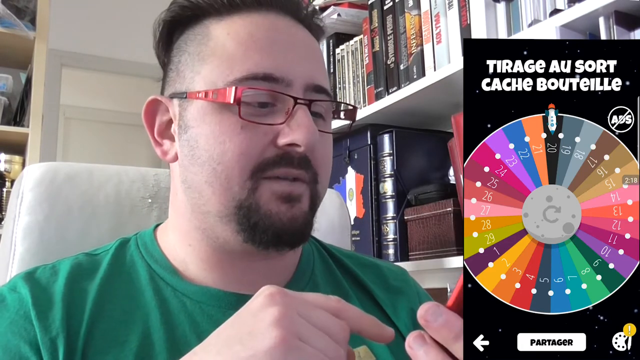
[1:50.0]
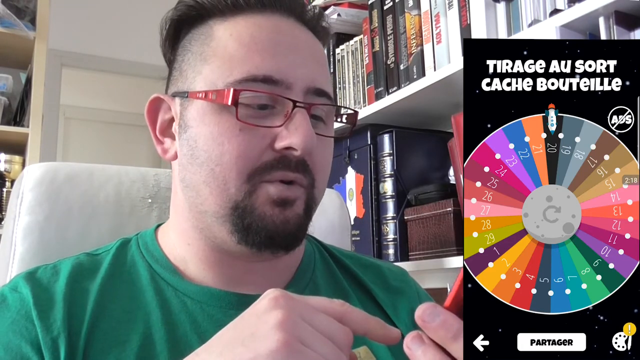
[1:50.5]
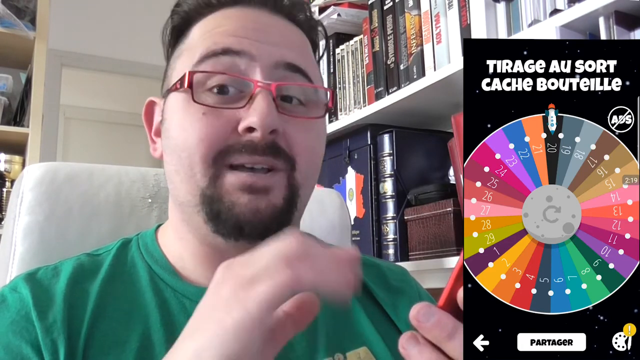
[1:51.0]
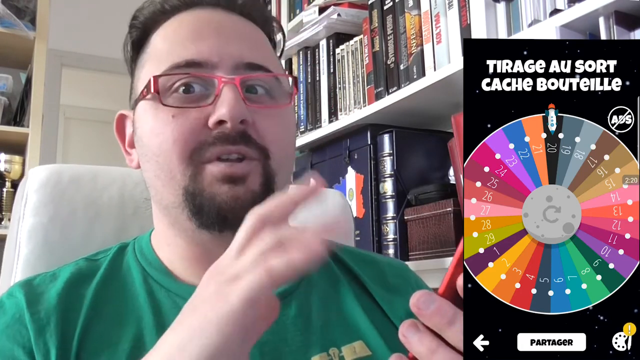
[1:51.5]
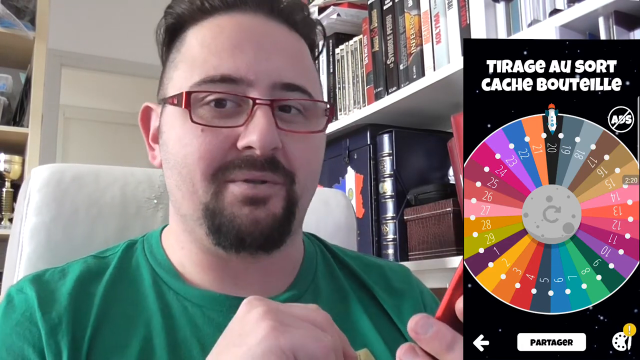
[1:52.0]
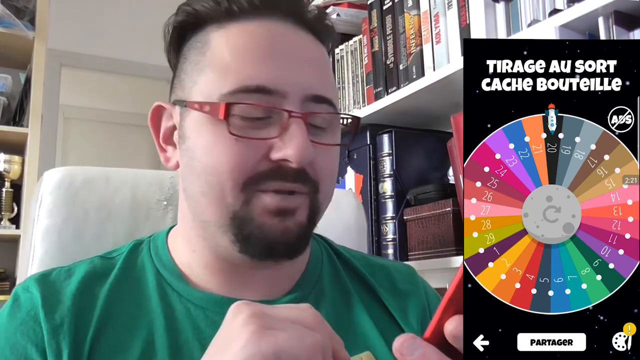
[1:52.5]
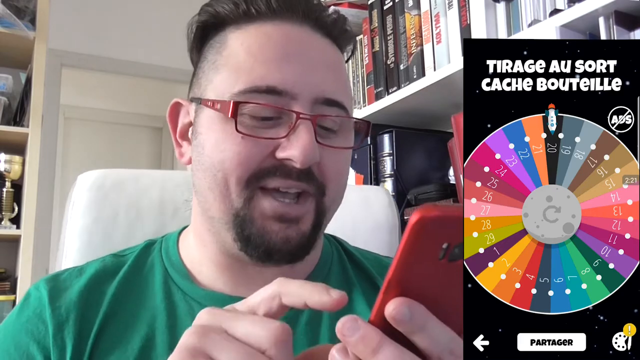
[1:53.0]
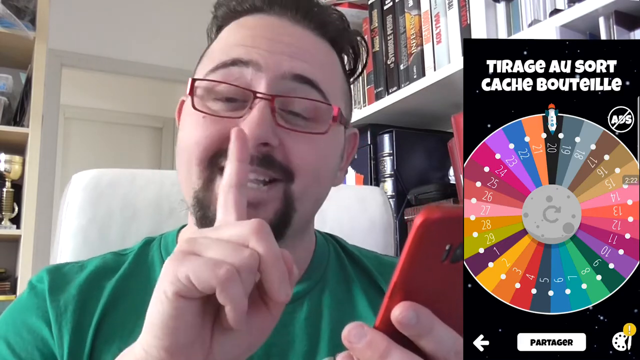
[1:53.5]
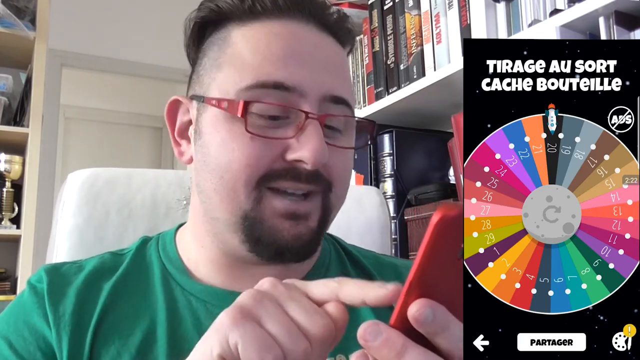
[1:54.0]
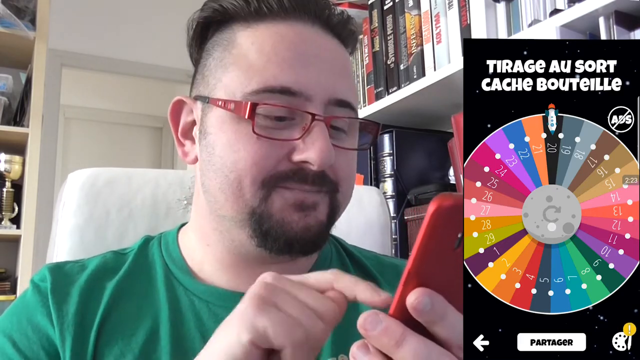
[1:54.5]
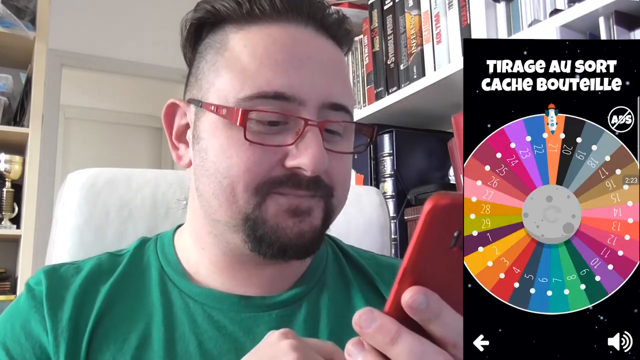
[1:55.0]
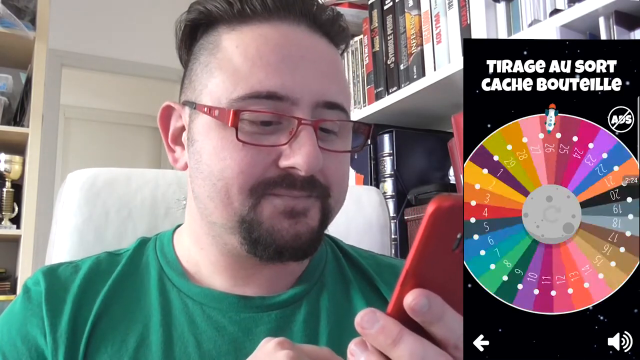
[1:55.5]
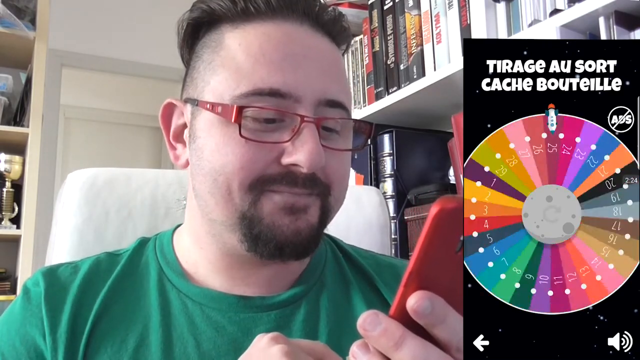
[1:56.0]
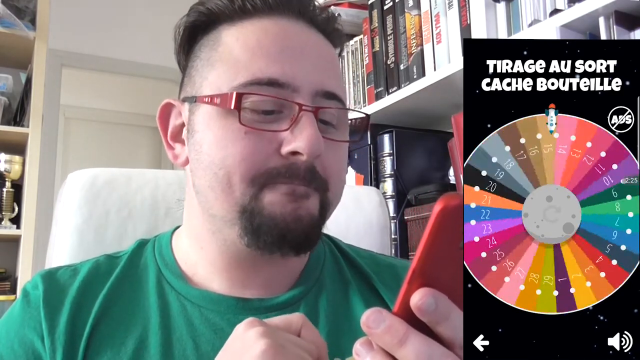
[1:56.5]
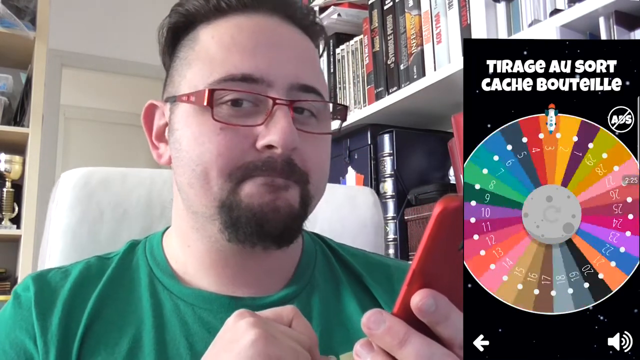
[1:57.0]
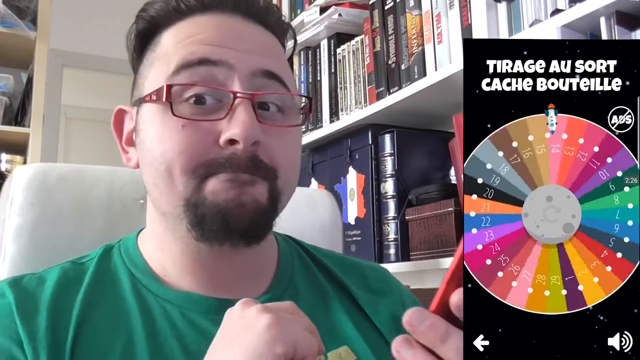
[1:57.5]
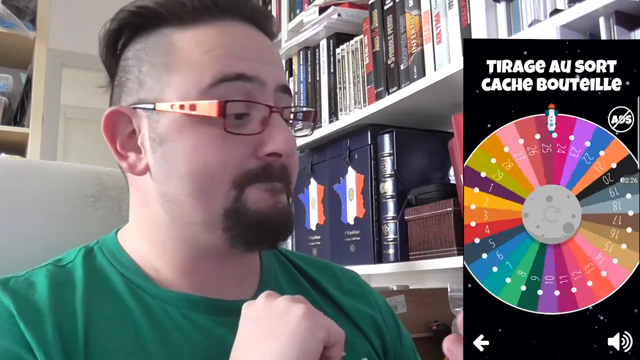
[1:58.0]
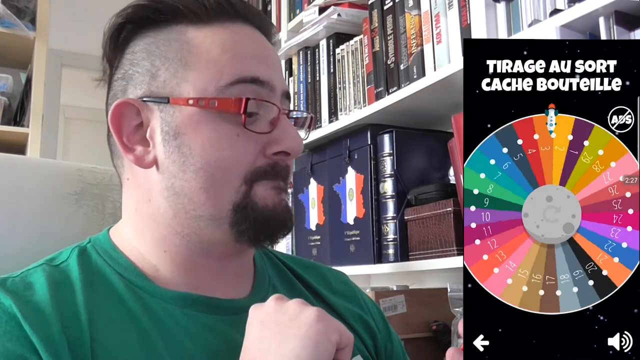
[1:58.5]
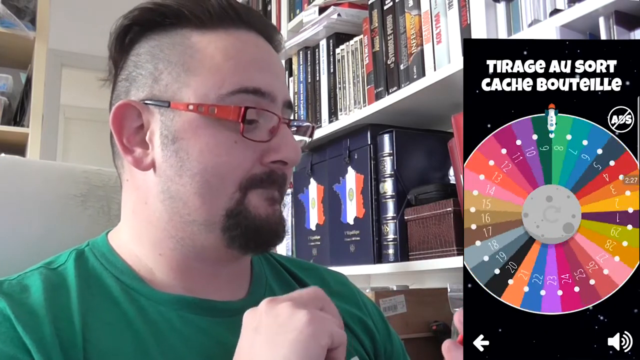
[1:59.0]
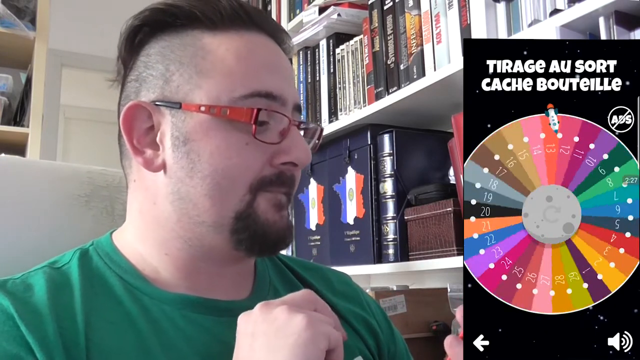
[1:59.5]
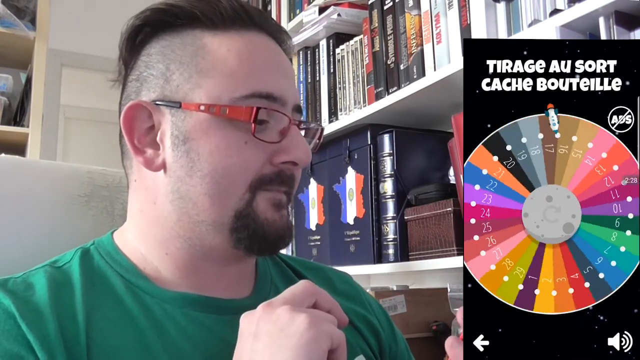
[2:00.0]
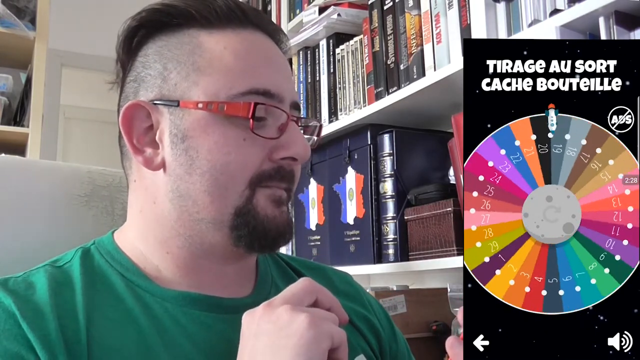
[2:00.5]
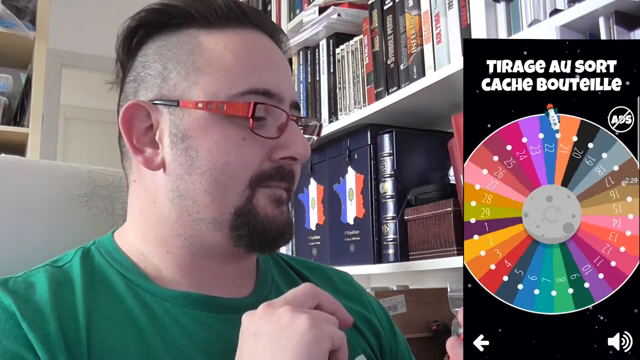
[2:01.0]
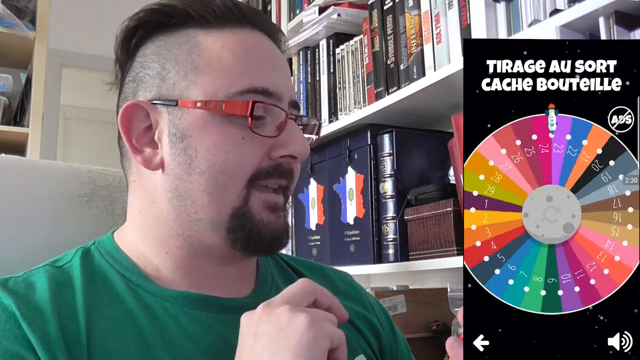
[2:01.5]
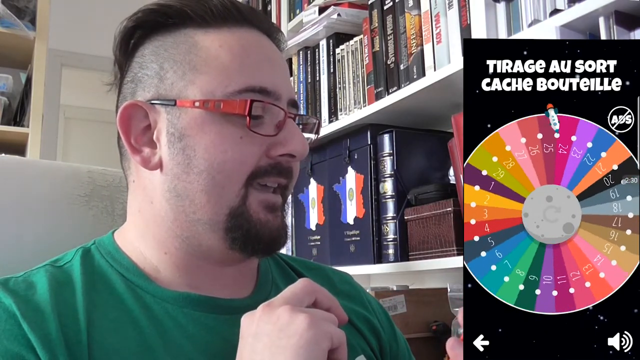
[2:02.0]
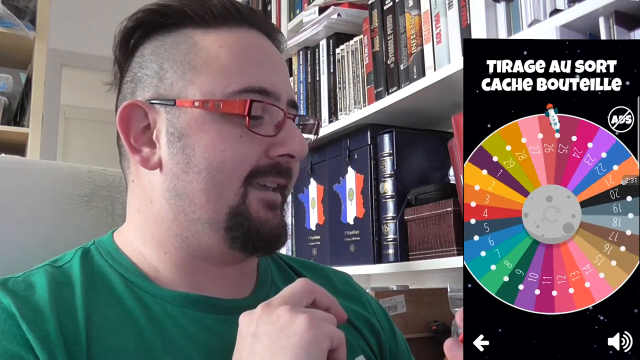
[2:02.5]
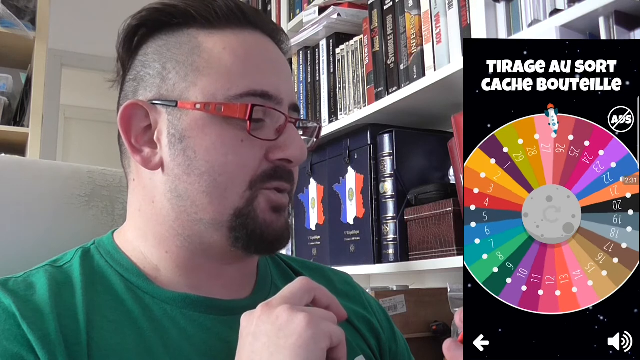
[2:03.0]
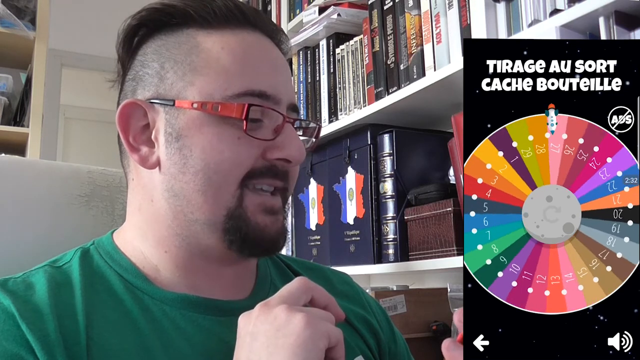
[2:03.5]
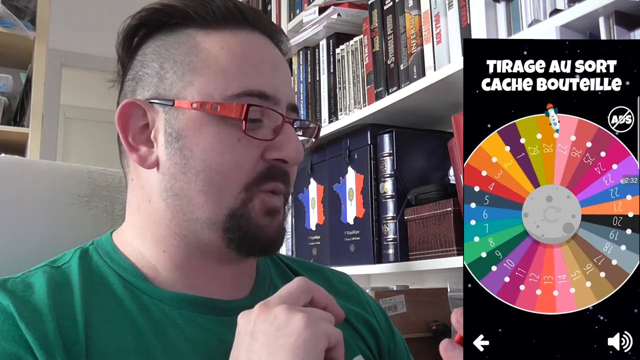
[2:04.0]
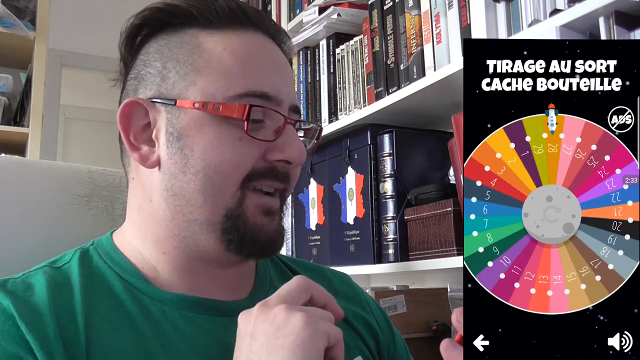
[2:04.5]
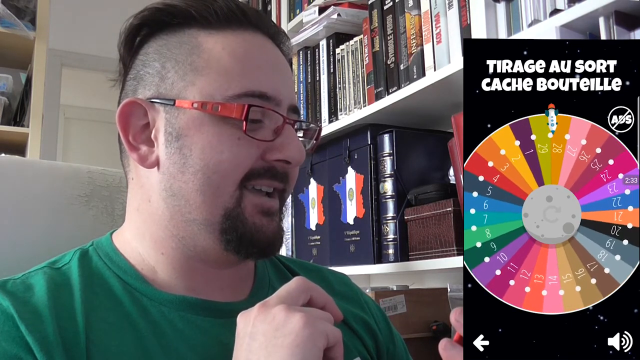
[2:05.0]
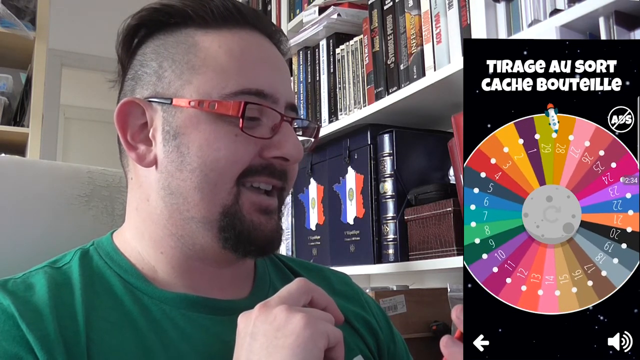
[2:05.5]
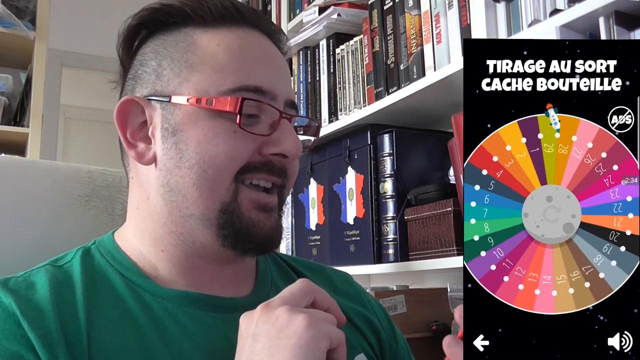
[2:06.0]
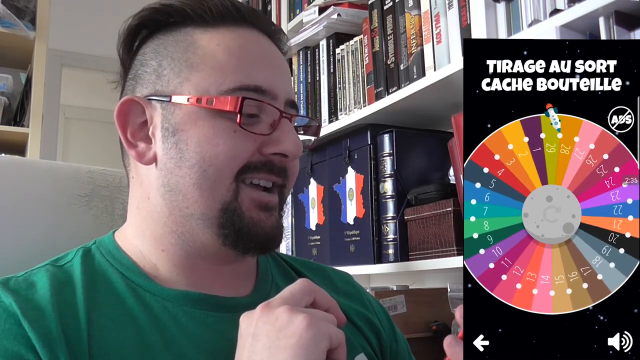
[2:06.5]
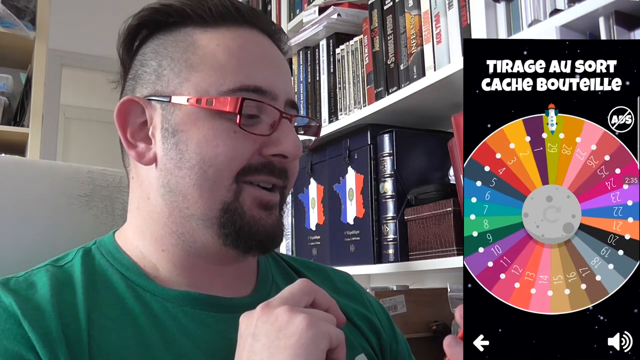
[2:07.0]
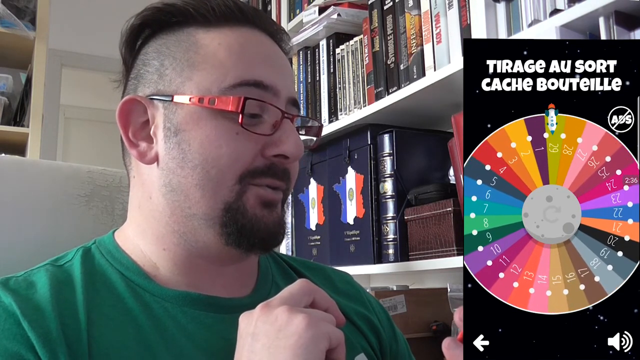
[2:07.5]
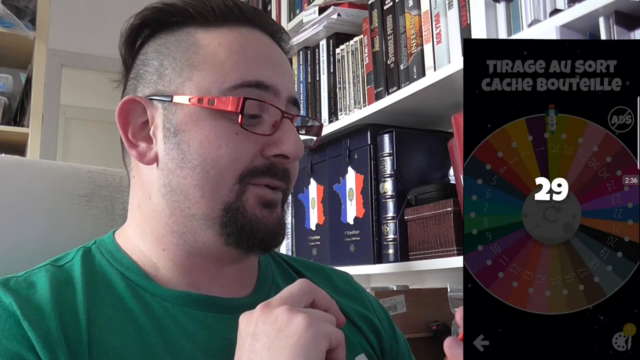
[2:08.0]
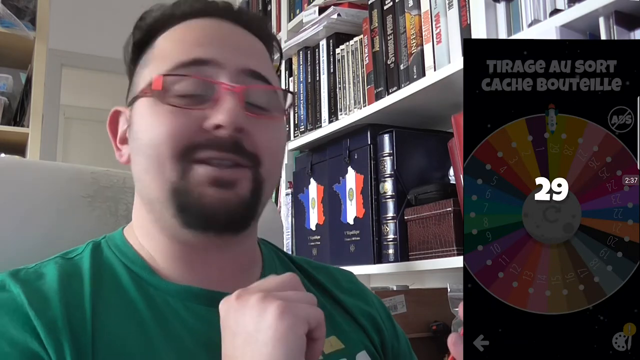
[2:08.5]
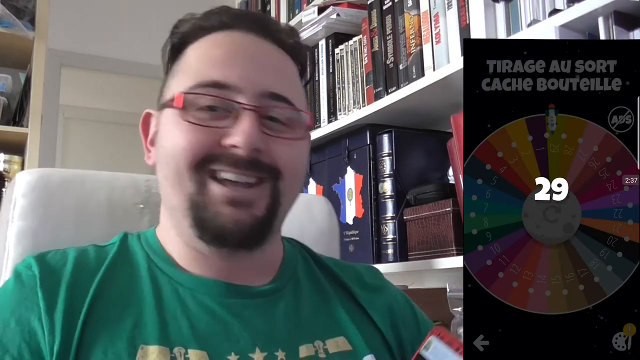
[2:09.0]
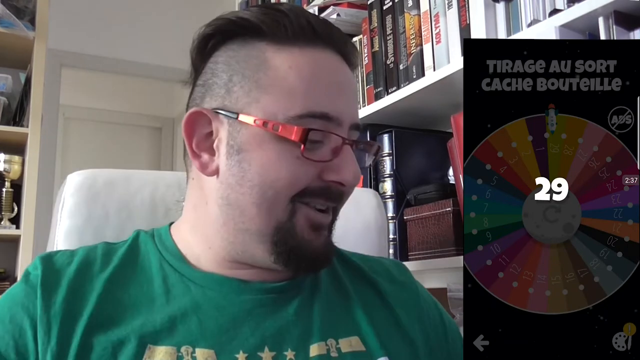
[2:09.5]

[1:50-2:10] He keeps showing the palette he is working on. The color is picked randomly and lands on green, number 29, a color that also looks brown.